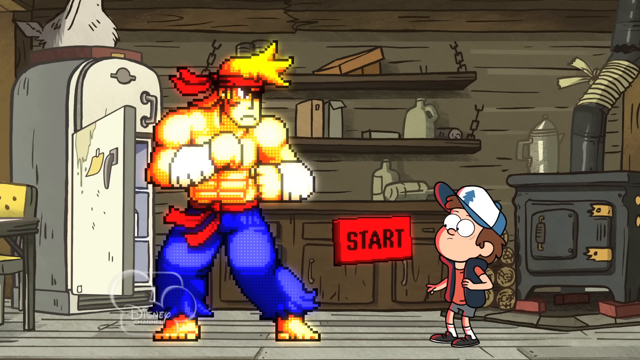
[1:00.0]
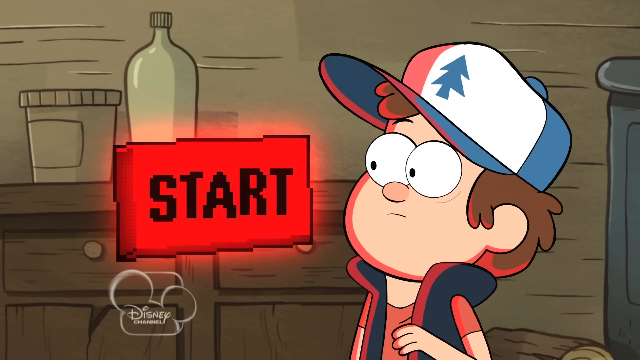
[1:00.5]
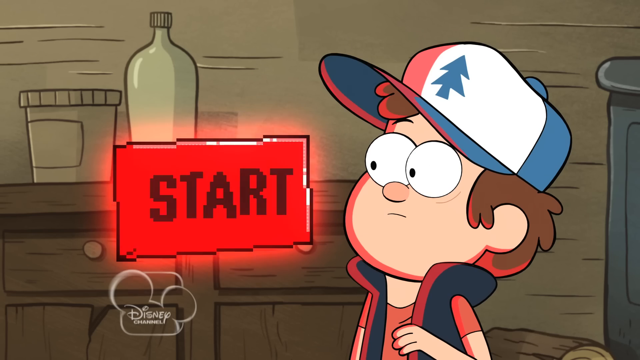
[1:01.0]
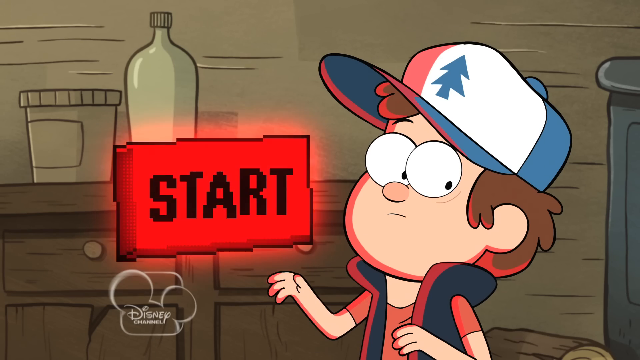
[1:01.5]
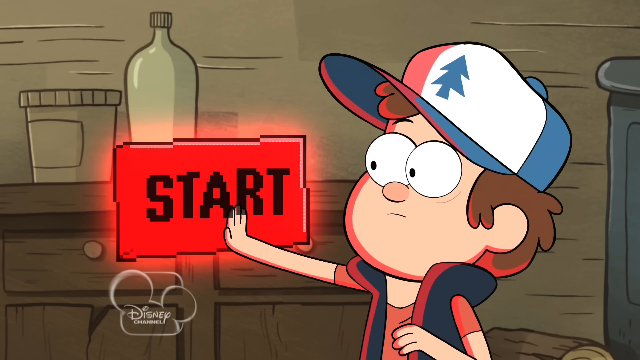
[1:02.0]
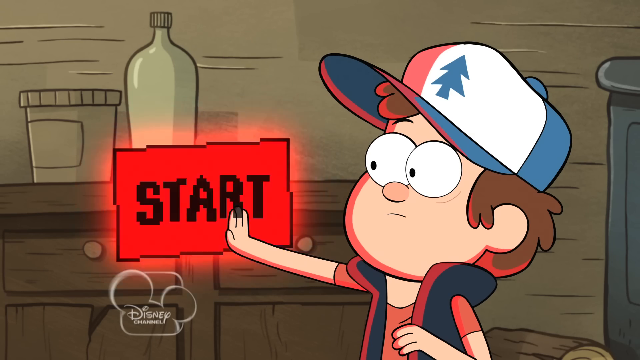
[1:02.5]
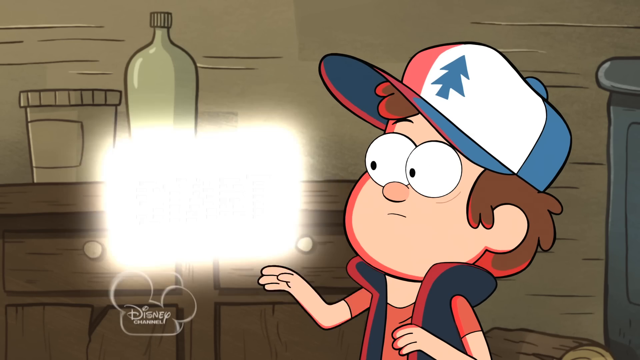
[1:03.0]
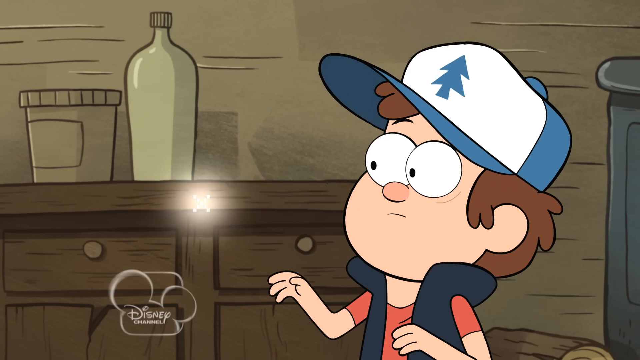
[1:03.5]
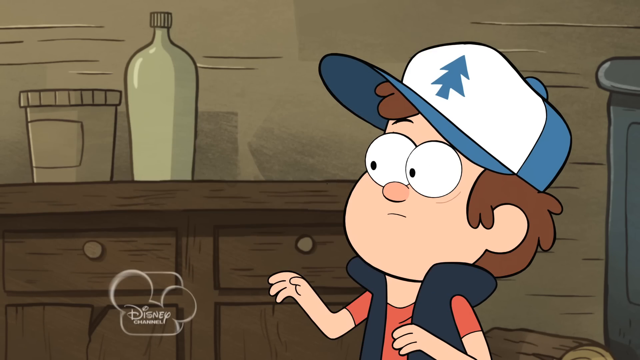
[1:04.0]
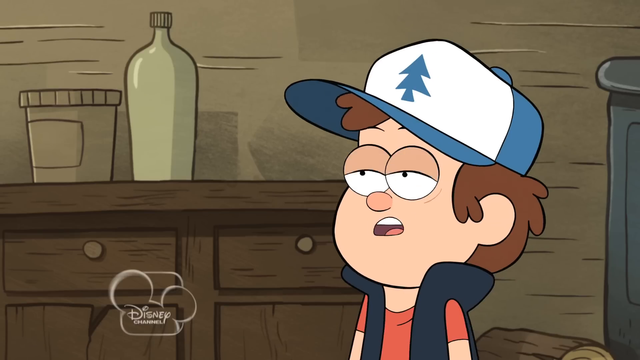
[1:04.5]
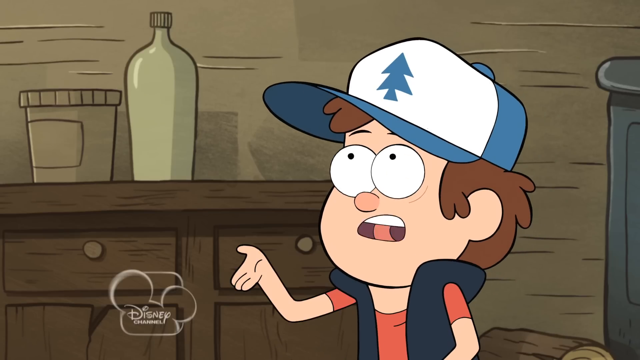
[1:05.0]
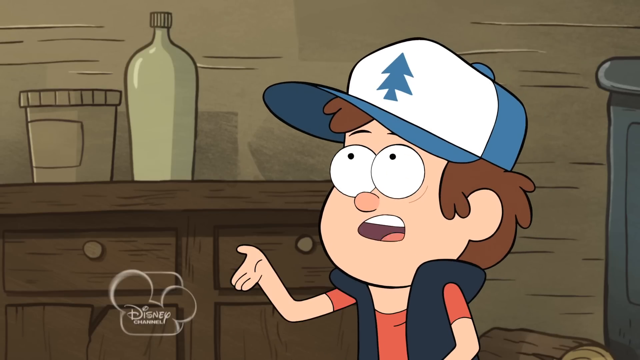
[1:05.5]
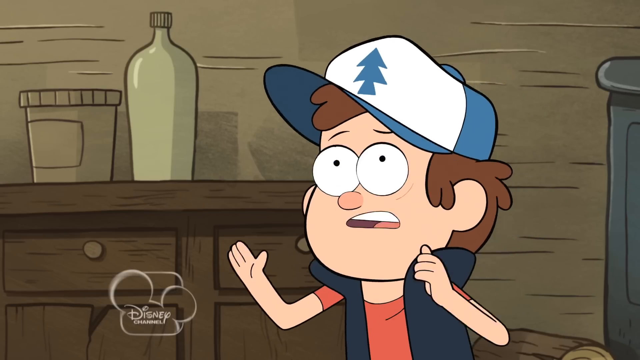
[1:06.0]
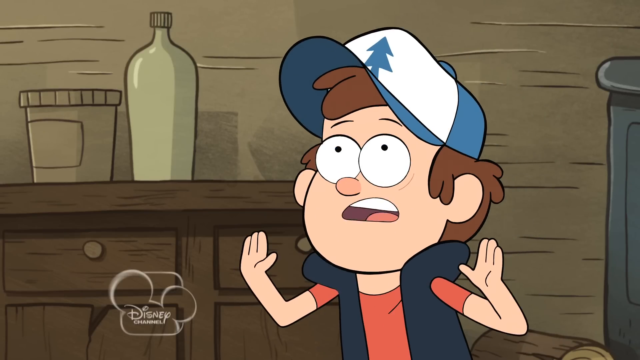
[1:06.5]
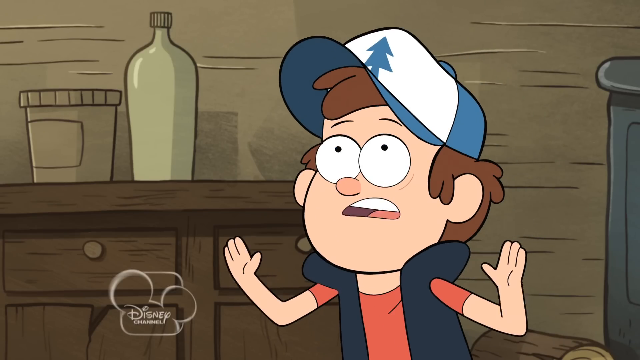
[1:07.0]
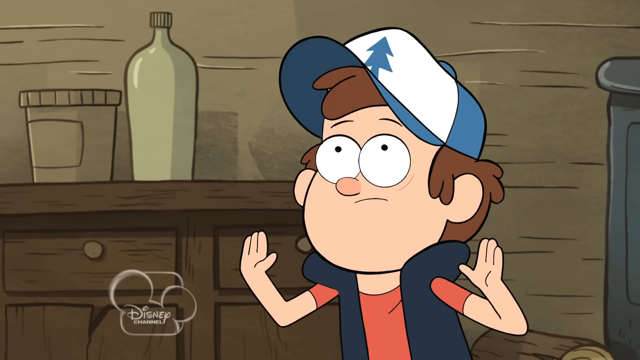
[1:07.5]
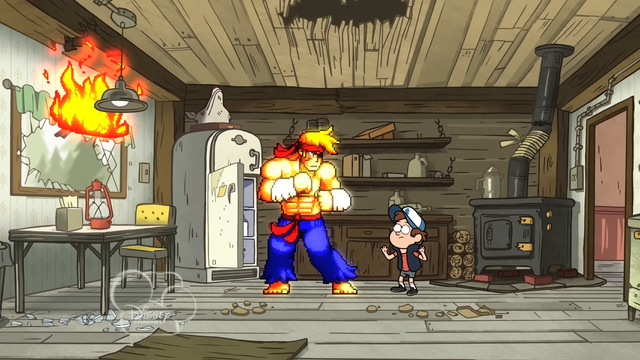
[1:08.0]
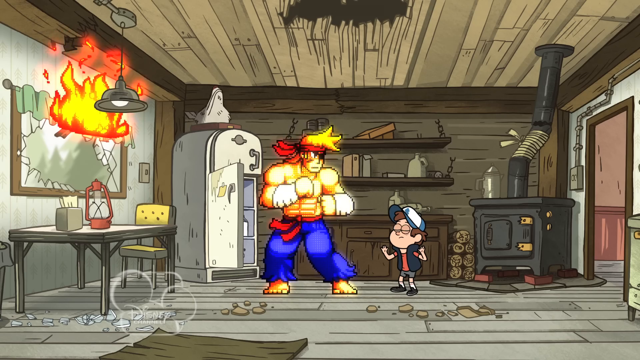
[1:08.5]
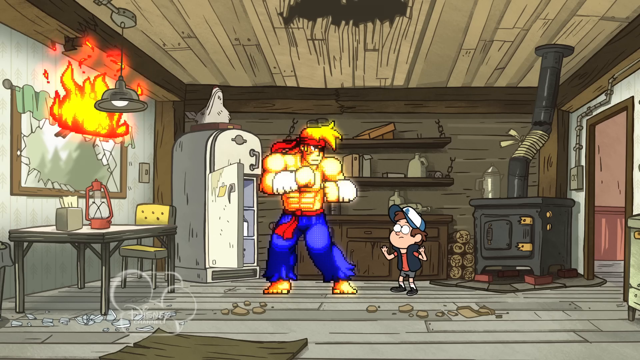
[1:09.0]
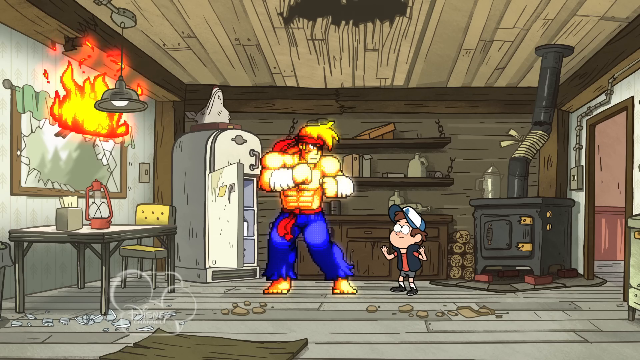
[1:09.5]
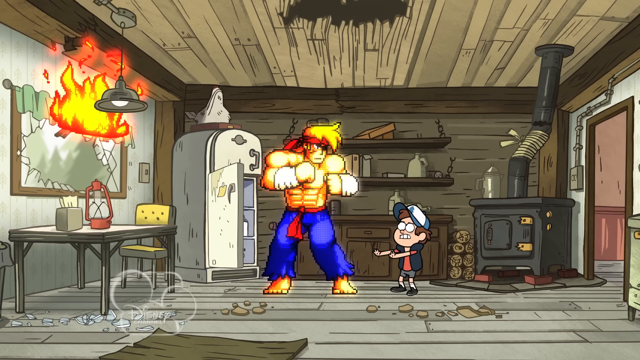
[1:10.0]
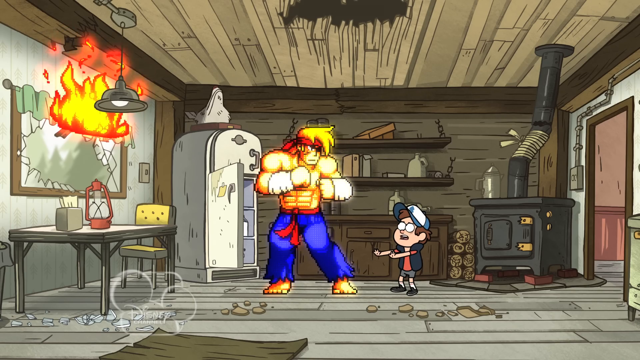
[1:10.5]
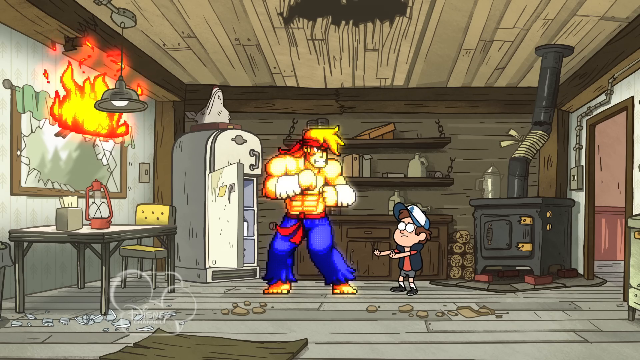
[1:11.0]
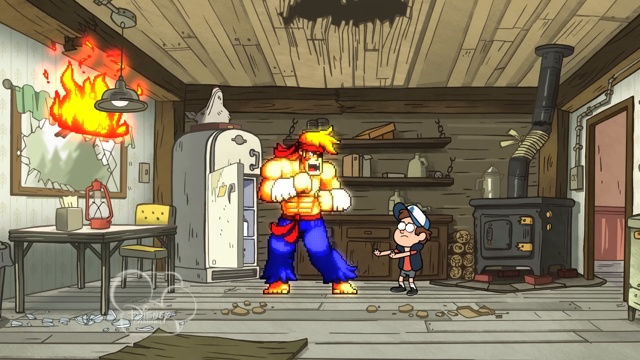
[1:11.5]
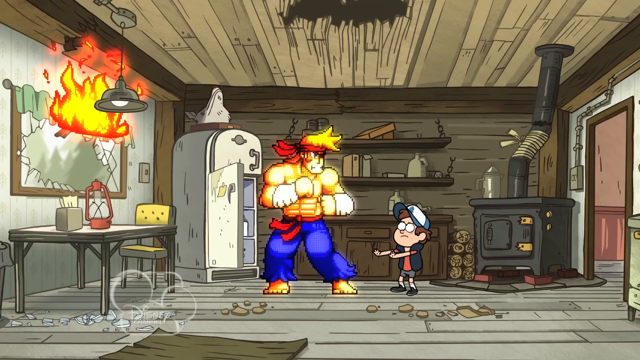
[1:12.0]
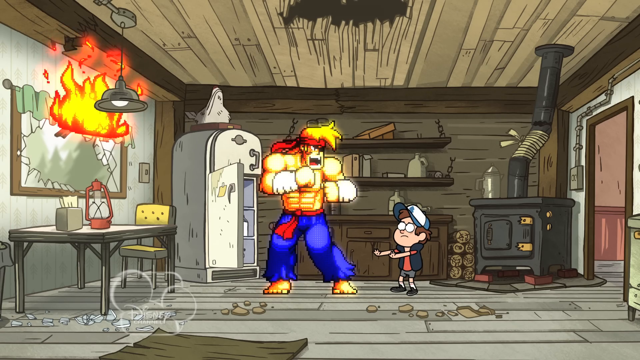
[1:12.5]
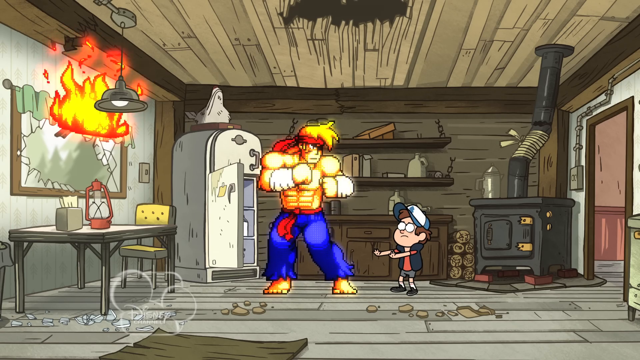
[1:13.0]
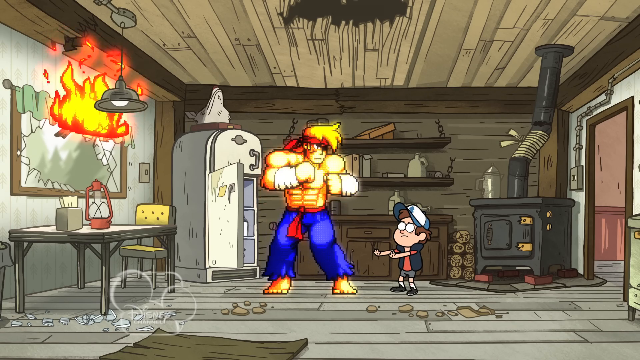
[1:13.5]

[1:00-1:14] In an animated scene, the Street Fighter character faces the little boy with his fists up as if ready to fight. A red start button appears in the middle of the screen, and the little boy presses it; it turns blue and red and disappears. A fire burns on the wall to the left, where the flame ball the Street Fighter threw broke the window and set the wall on fire. The Street Fighter character keeps bouncing around the room as if ready to fight, while the little boy stands next to him with his arms out in front of him as if in shock and unsure what to do.